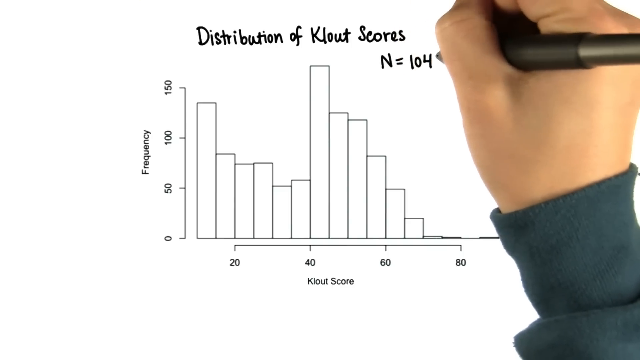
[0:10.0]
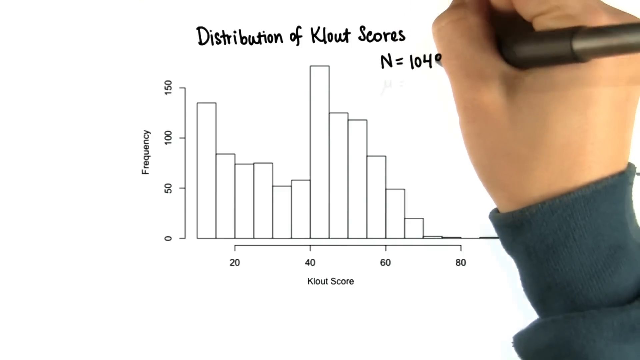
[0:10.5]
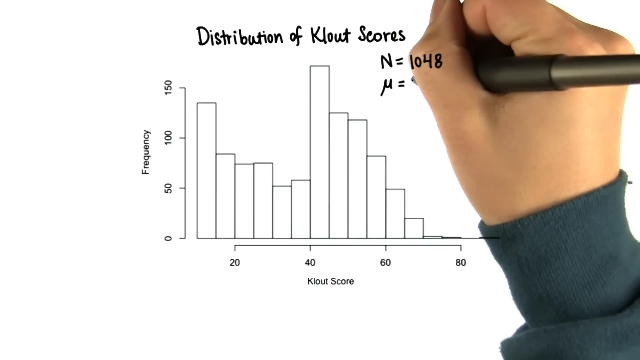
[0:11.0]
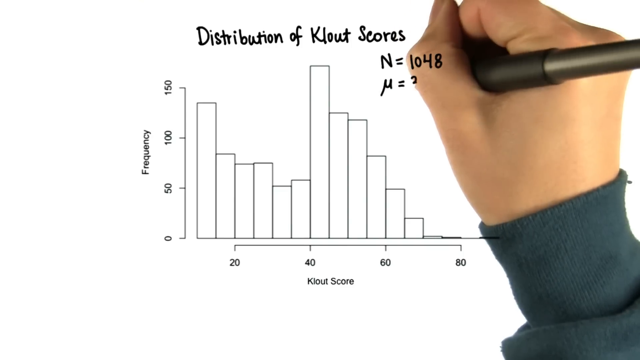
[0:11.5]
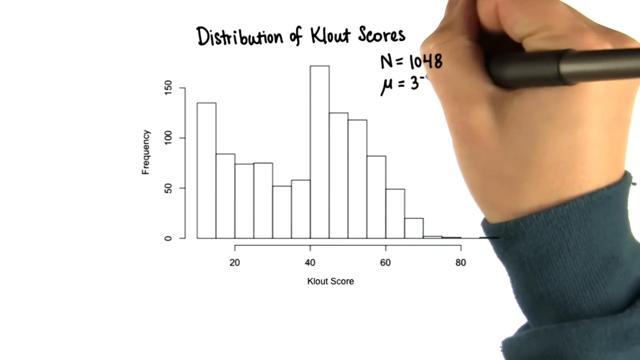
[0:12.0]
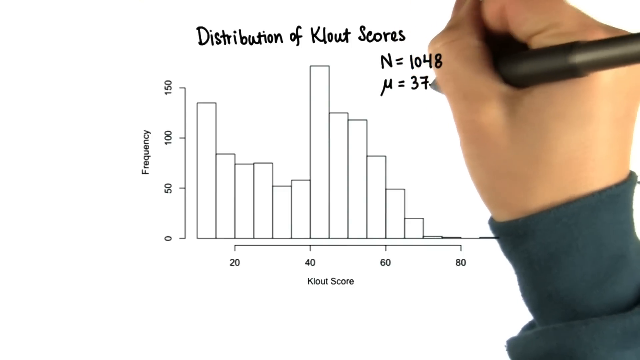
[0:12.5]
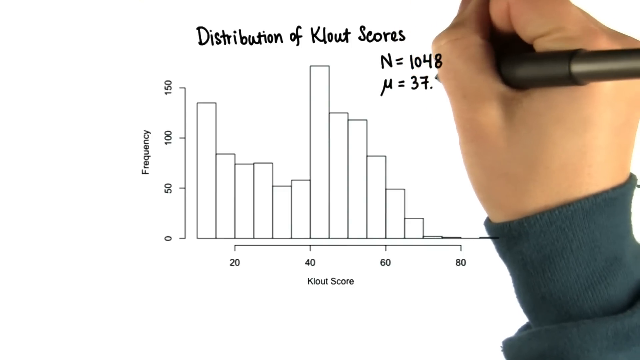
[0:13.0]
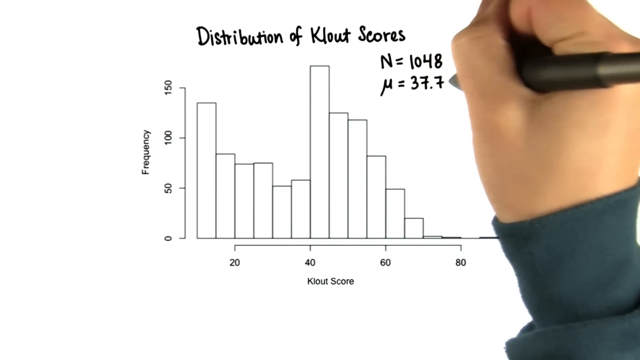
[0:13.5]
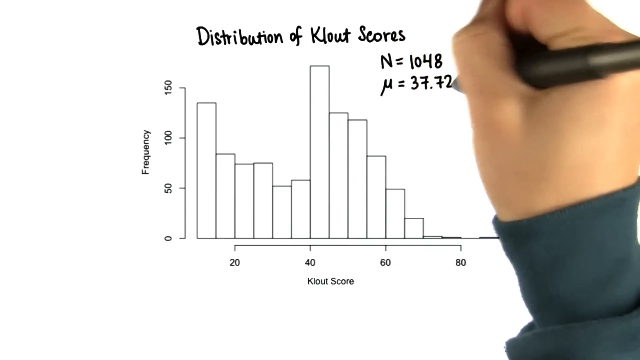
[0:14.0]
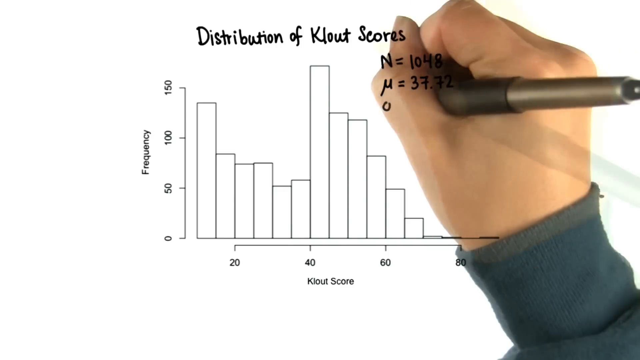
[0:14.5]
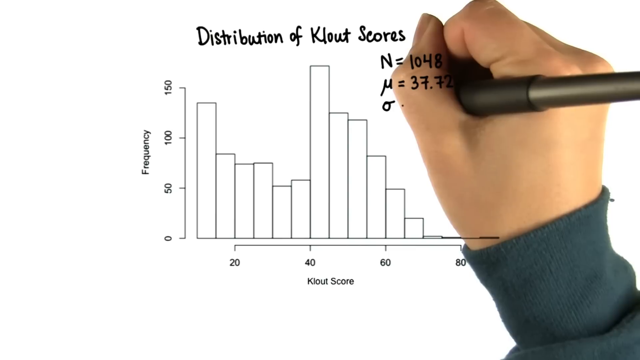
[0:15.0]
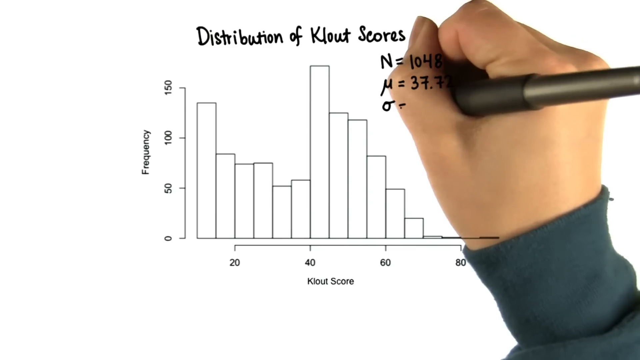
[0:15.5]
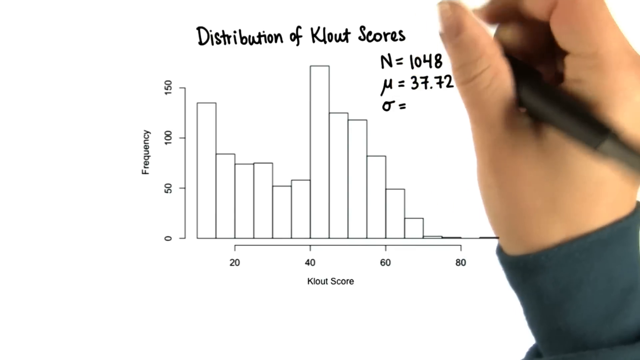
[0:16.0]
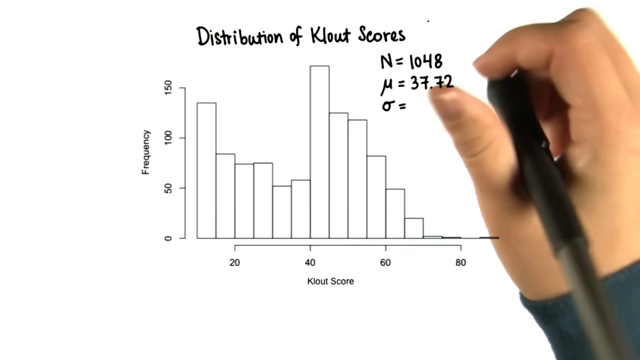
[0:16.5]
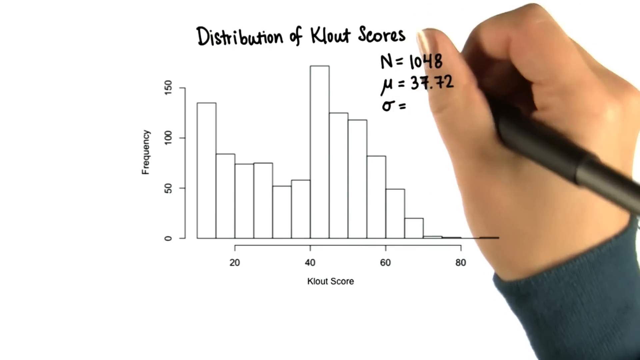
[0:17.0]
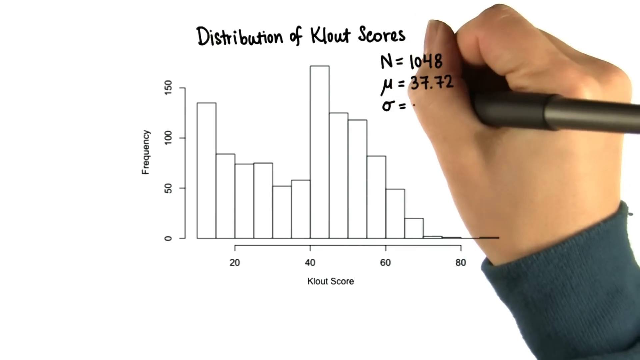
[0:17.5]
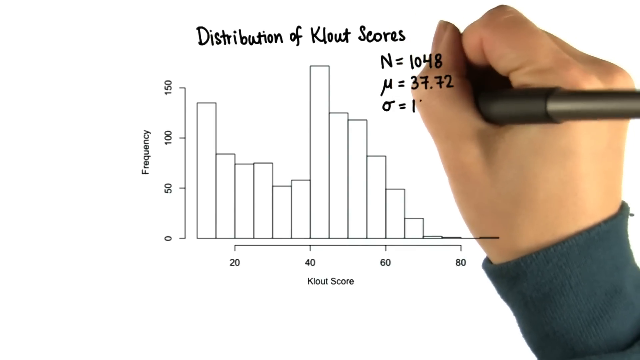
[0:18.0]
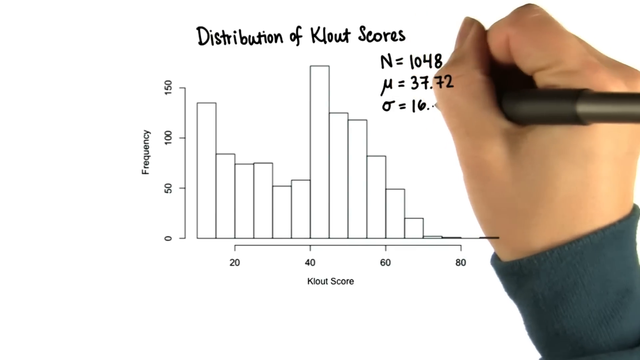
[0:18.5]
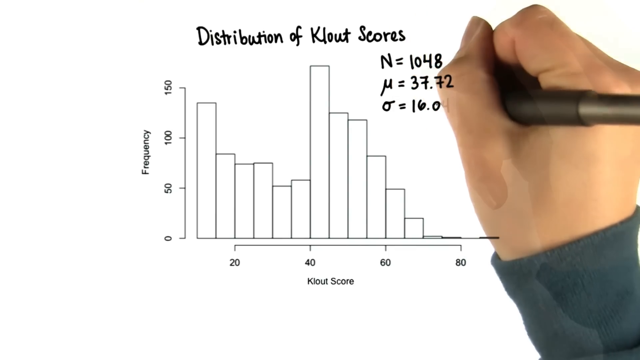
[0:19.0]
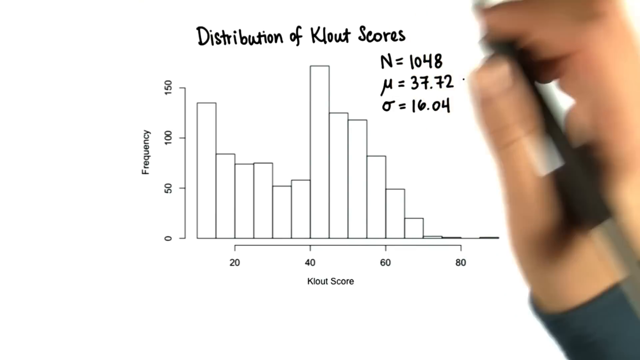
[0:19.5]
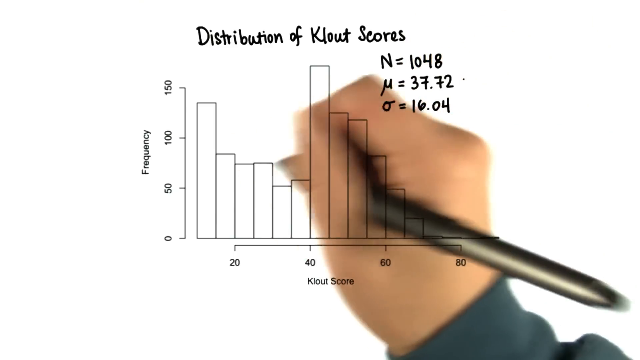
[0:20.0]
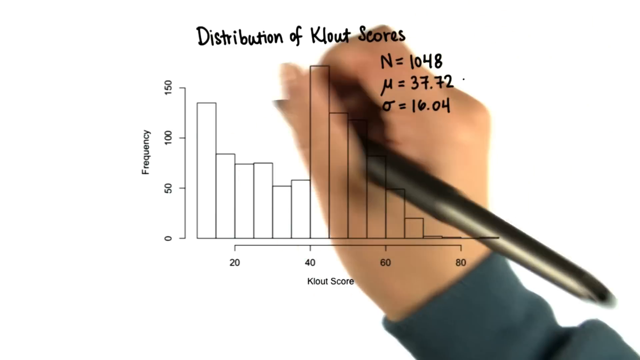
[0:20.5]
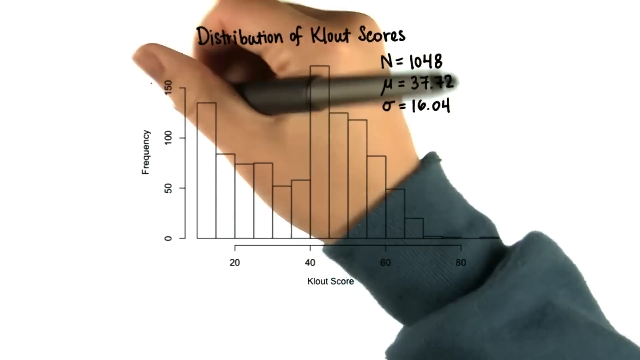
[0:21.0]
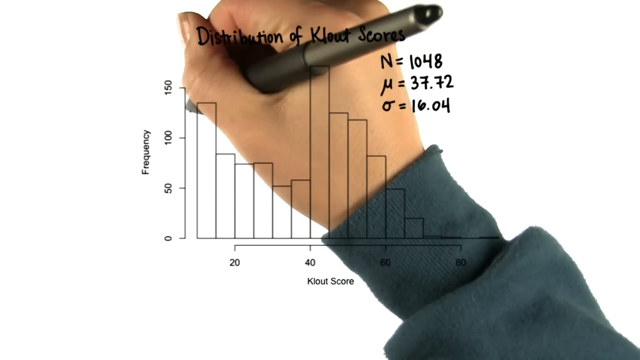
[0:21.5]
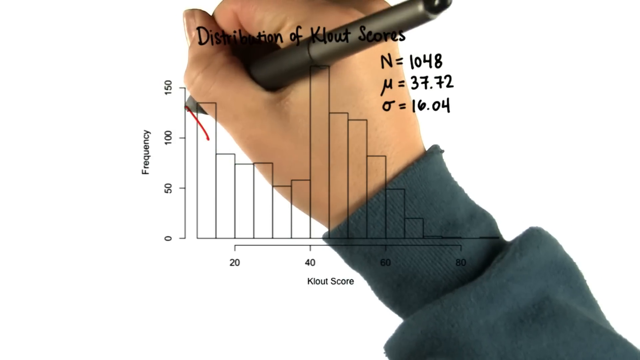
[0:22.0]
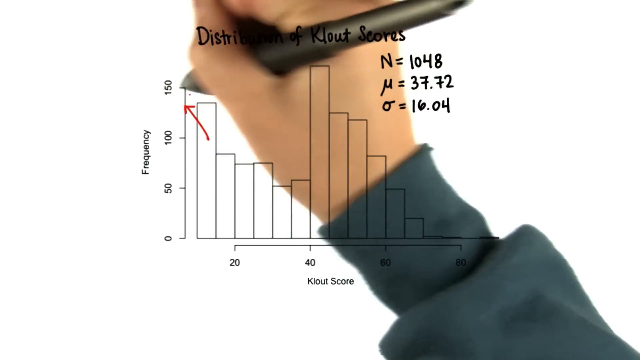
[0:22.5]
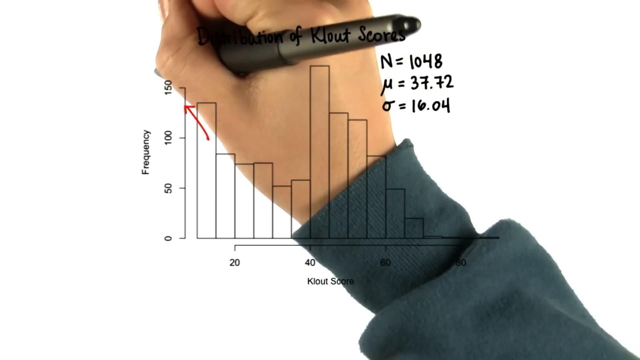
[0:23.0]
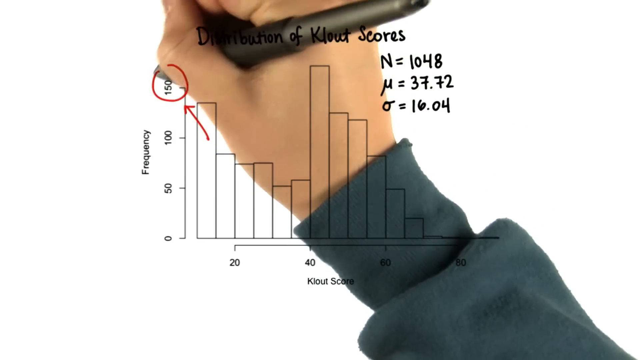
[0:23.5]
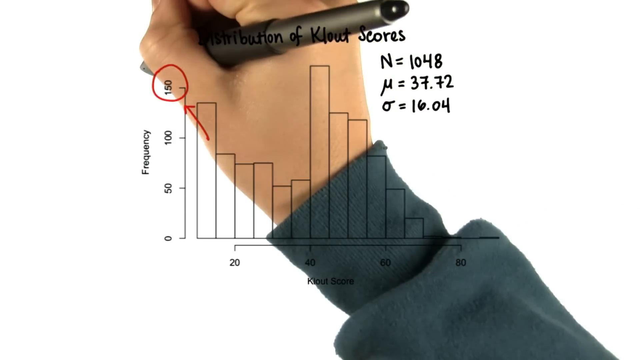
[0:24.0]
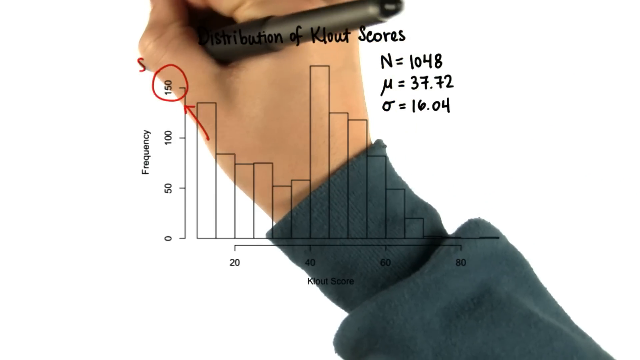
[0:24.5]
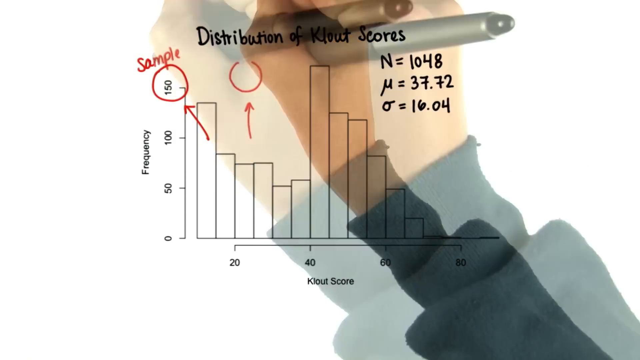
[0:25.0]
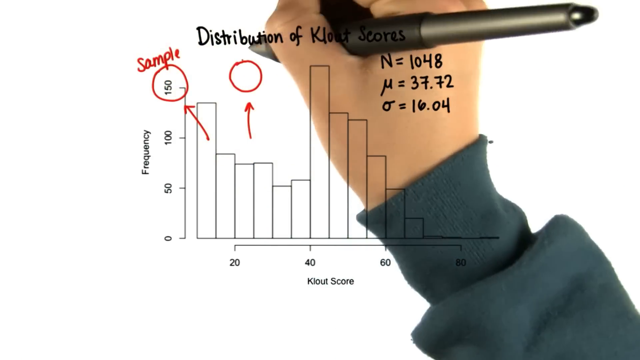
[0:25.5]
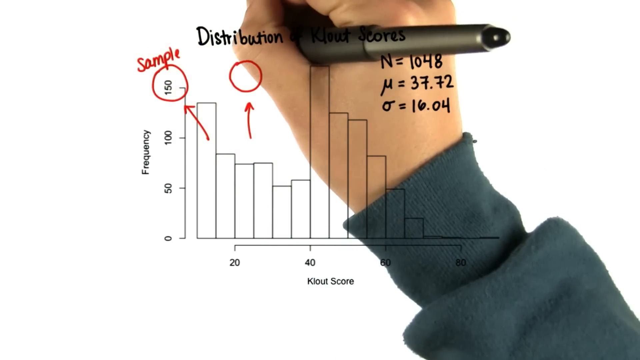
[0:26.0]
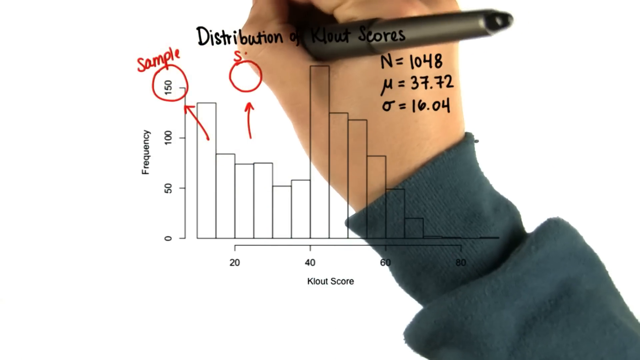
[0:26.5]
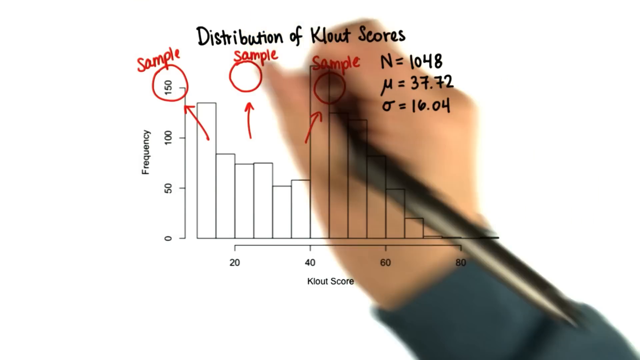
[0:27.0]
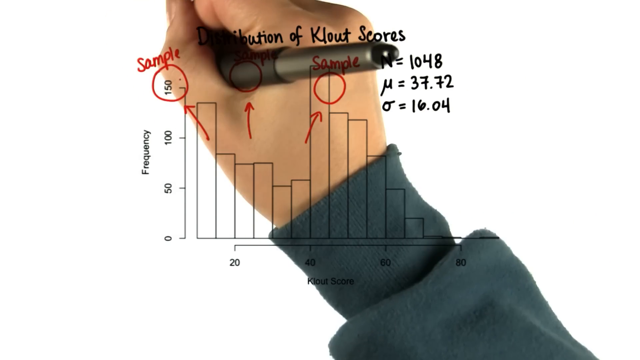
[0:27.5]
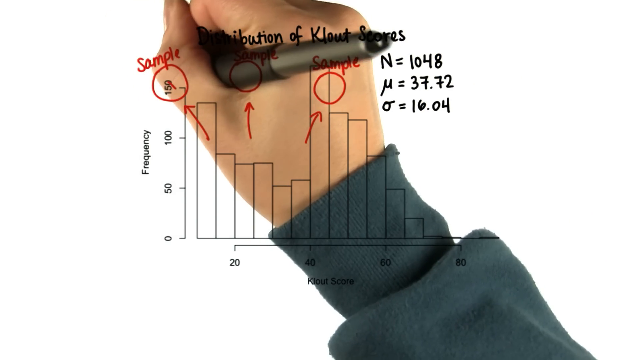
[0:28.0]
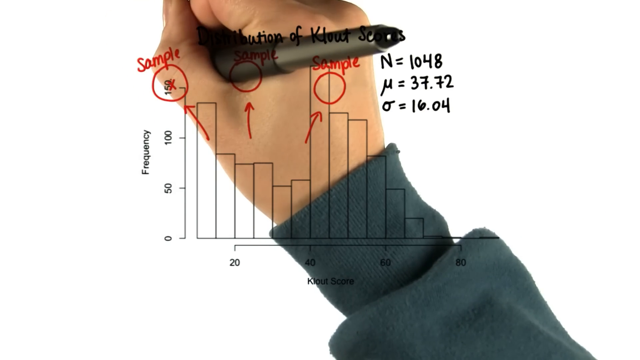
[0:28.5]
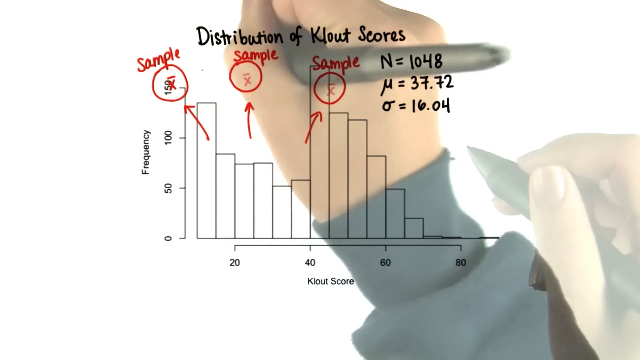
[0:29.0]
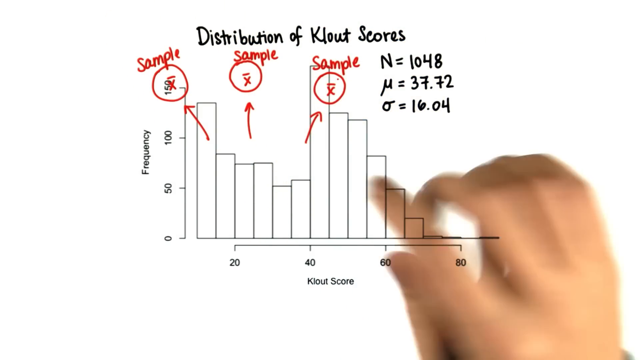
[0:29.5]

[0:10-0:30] The same white background, gradating into gray and then black toward the bottom, shows the graph in the center with the written title "distribution of clout scores." The vertical side reads "frequency" from 0 to 150, and the horizontal line is the clout score, starting at 20 and going up by 20s to 80, with bars of varying heights. A hand that looks feminine holds some kind of writing utensil and writes over the area; more of her becomes visible, and she is wearing some kind of long-sleeve green shirt. Under the title she writes in black "N = 1048," then a strange M-like symbol "= 3772," then an O with a line going to the right "= 1604." The writing then changes from black to red: she draws an arrow pointing to 150, circles the 150, and writes "sample." Just under "distribution" she draws an arrow going up with a circle and writes "sample," and to the left of that, just under "clout," an arrow going to the right with a circle labeled "sample." In each of the circles she writes an X with a line over it.